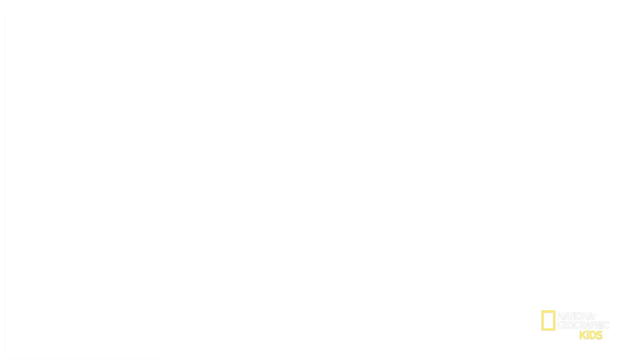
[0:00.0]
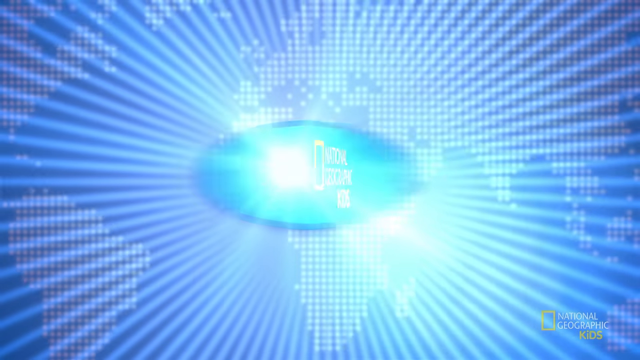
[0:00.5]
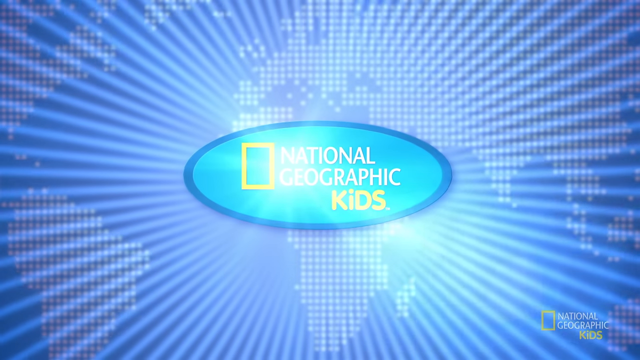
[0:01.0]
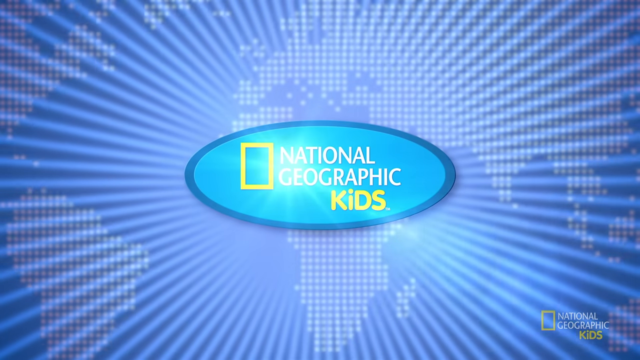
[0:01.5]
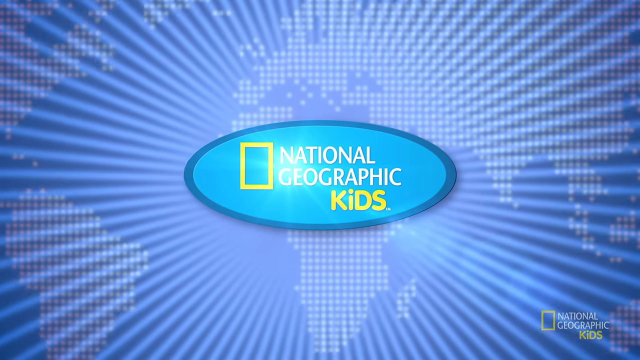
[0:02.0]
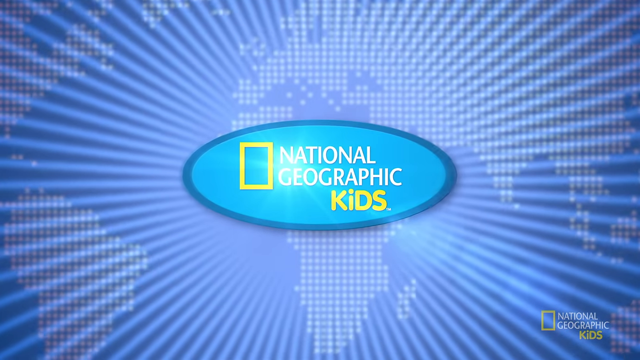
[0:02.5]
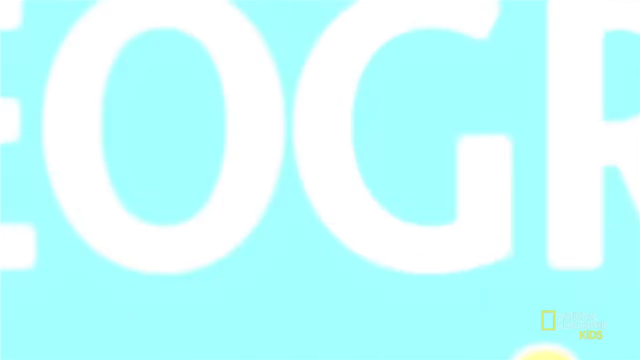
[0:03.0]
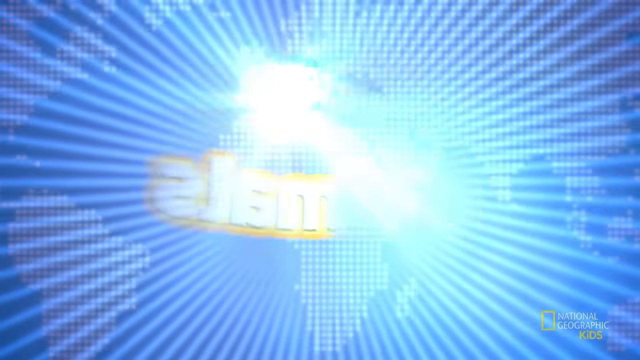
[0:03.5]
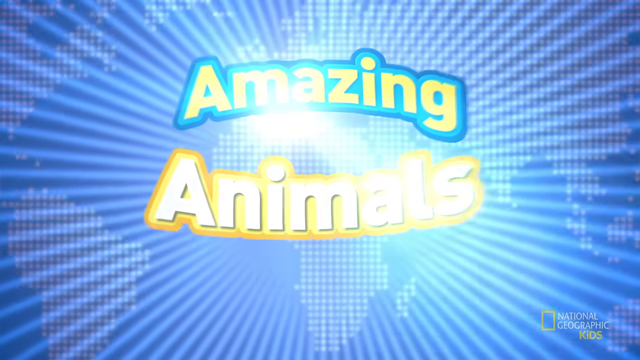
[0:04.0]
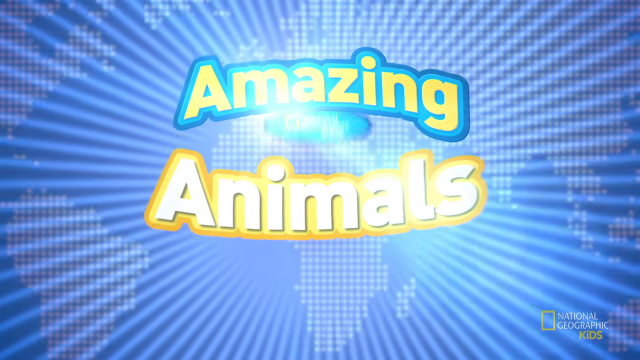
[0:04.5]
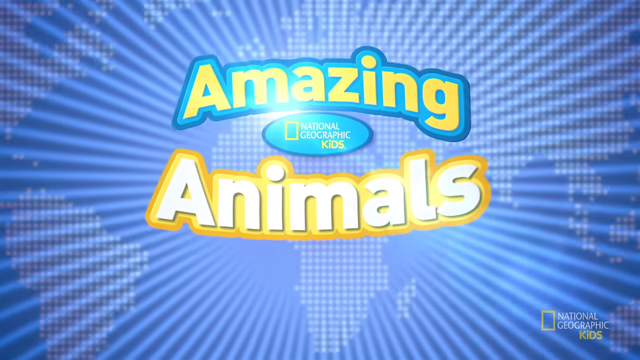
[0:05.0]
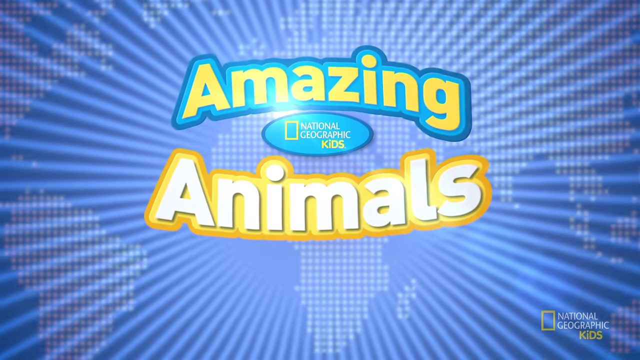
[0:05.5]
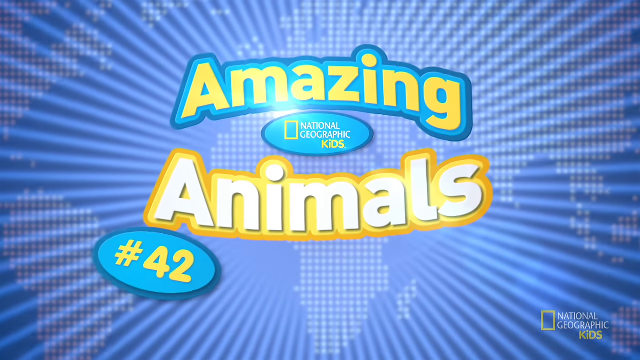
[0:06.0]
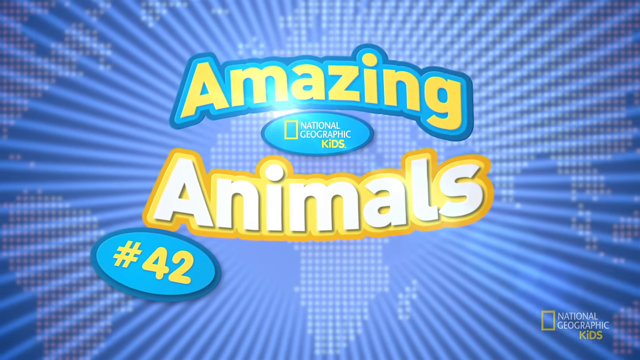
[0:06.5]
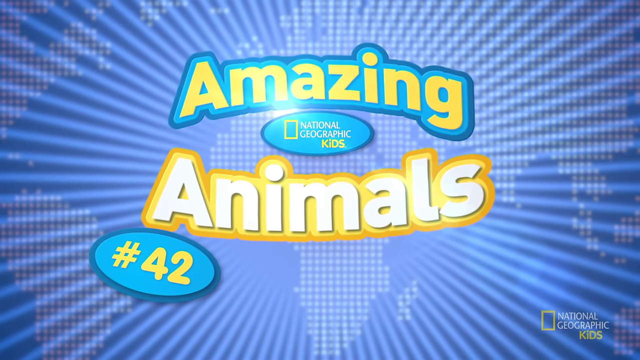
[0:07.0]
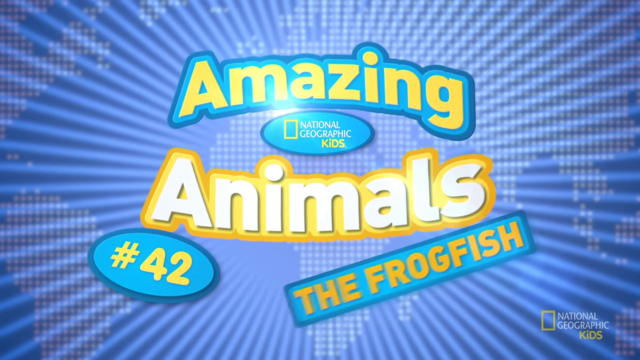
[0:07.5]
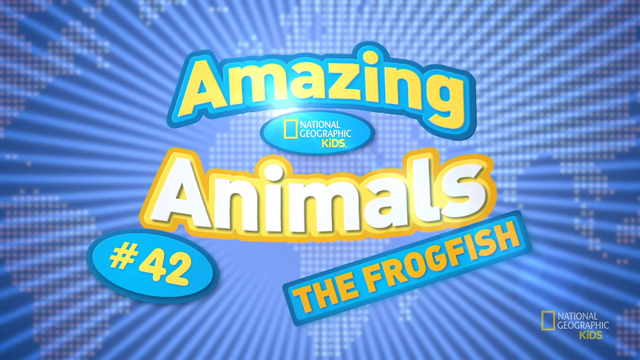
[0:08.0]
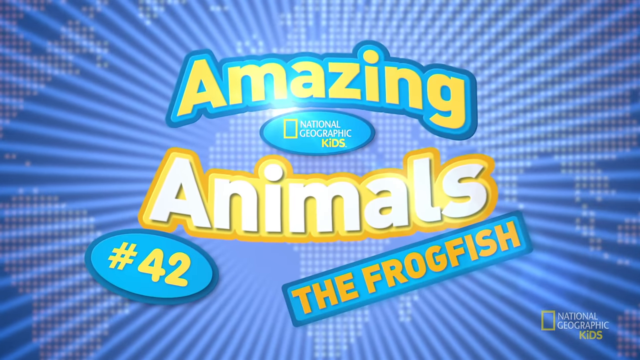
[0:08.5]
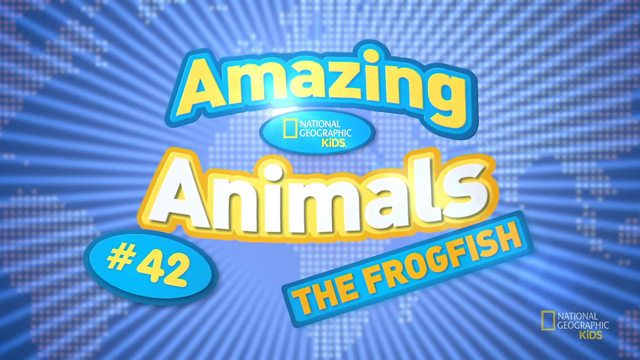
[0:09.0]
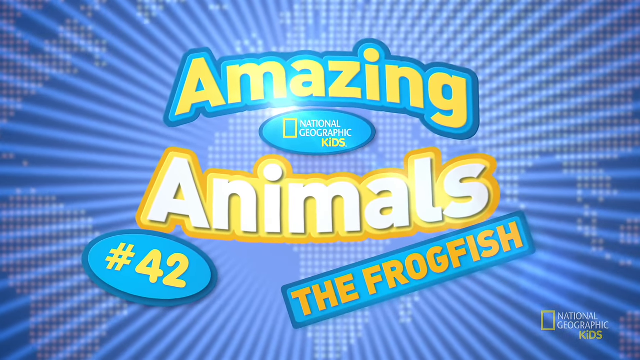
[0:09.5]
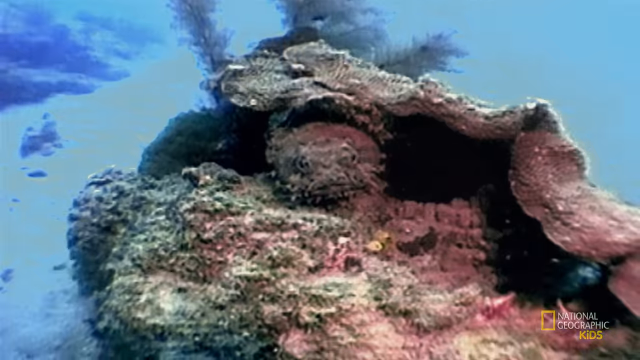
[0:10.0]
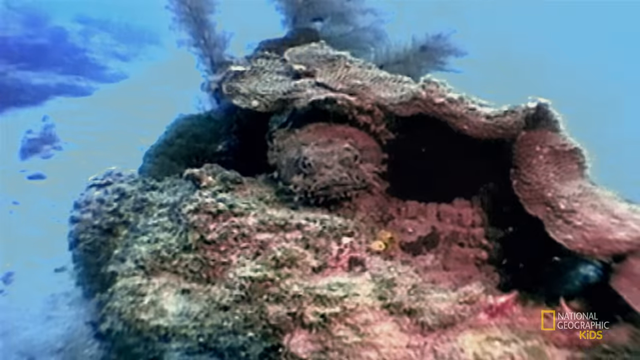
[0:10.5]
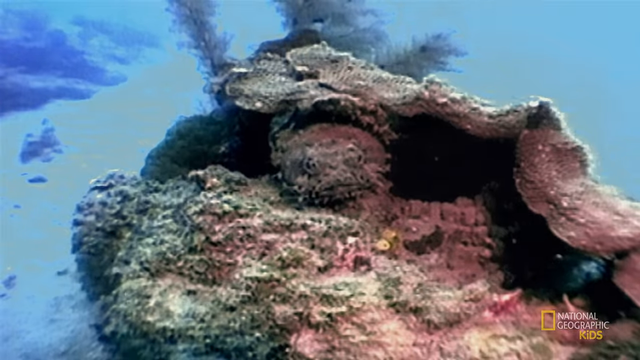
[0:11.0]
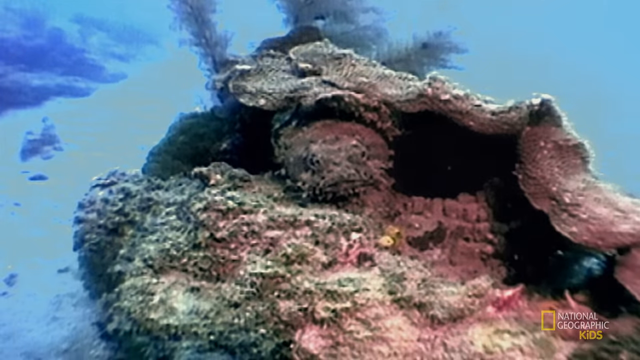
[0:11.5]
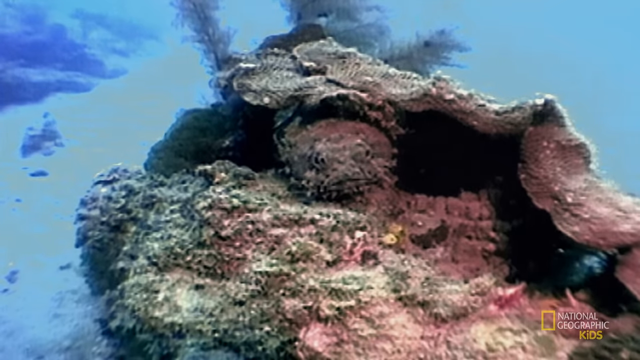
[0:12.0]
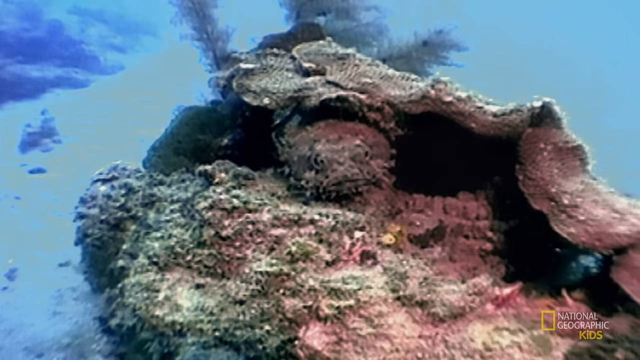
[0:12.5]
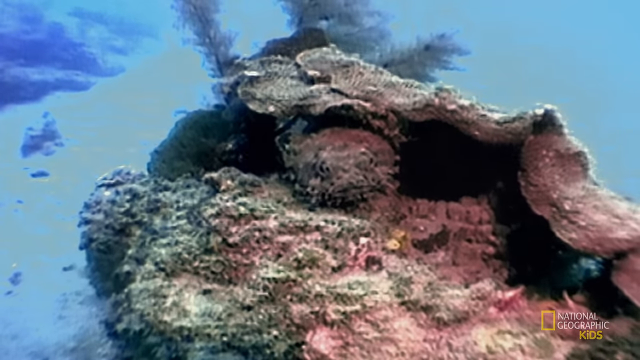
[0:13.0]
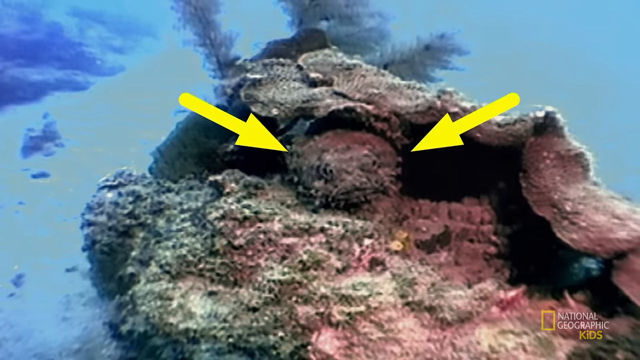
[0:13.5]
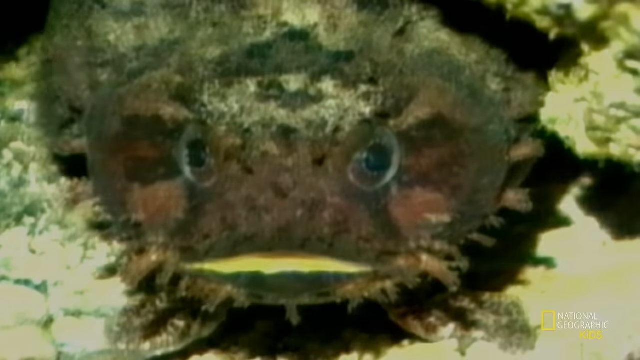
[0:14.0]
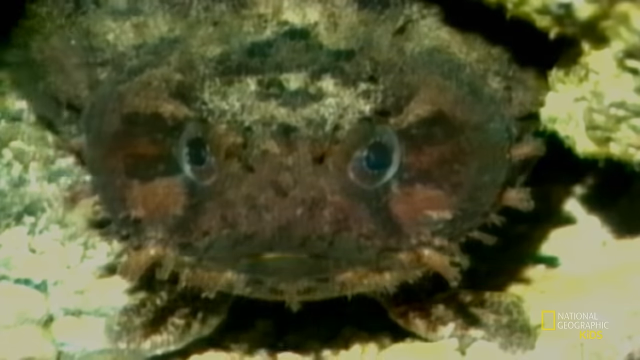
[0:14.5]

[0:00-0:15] The video opens on a blue background with the National Geographic Kids logo. The show is Amazing Animals from National Geographic Kids, episode 42, about the frogfish. It then cuts to footage of the frogfish, a marine animal underwater on top of some rocks, which is not very good-looking. Two yellow arrows have been added pointing to the frogfish to show where it is, because it blends in with the background.